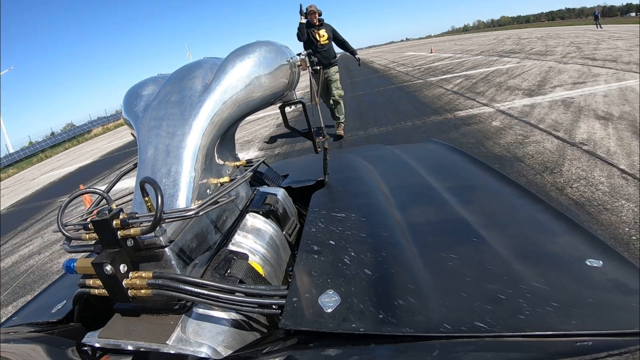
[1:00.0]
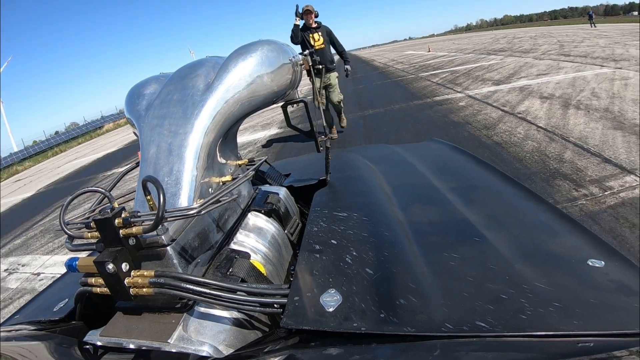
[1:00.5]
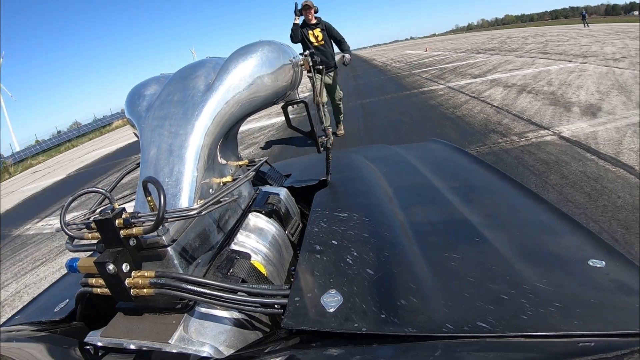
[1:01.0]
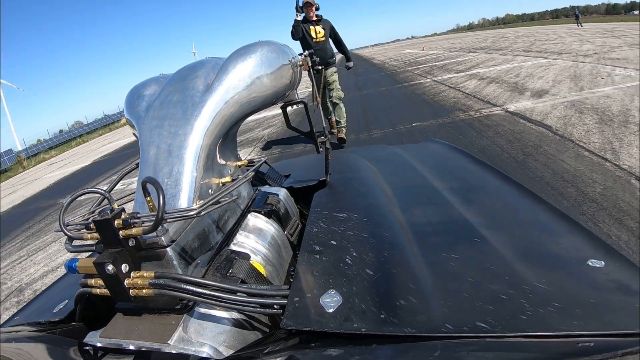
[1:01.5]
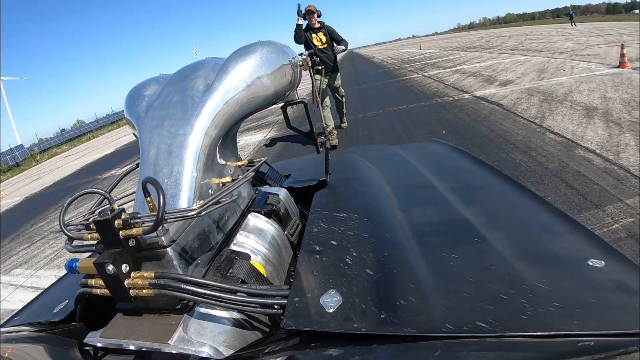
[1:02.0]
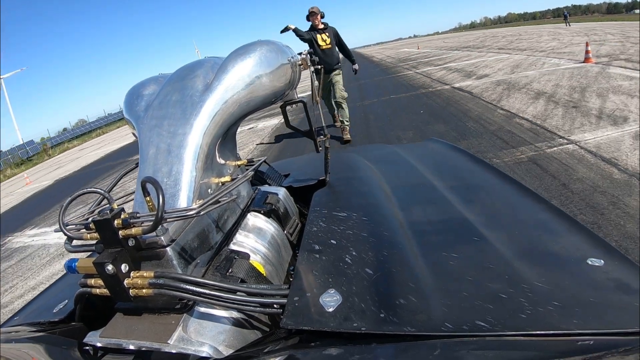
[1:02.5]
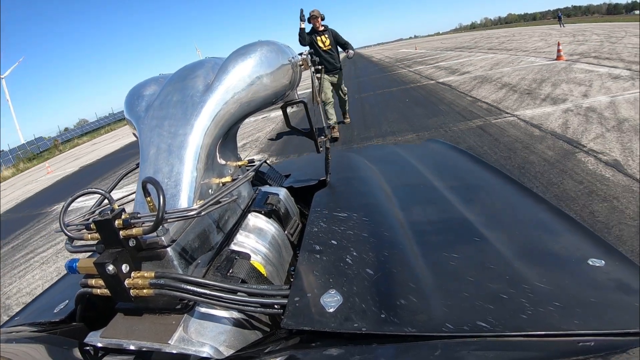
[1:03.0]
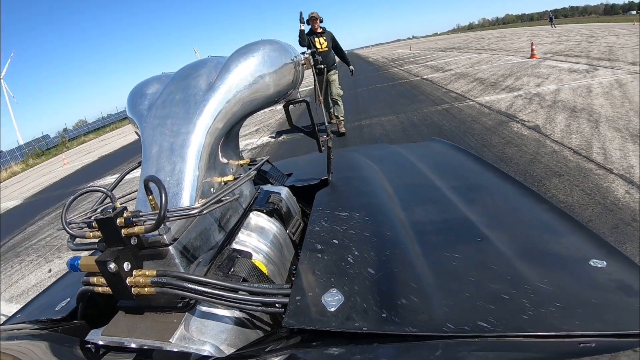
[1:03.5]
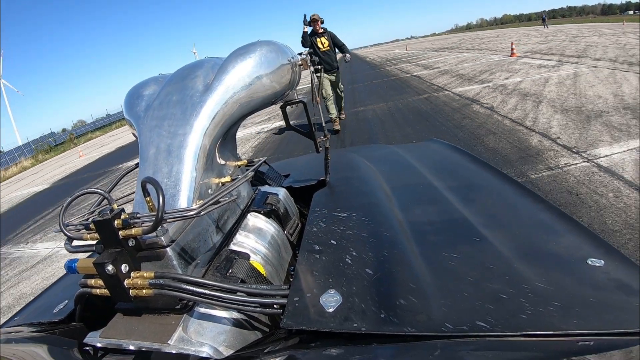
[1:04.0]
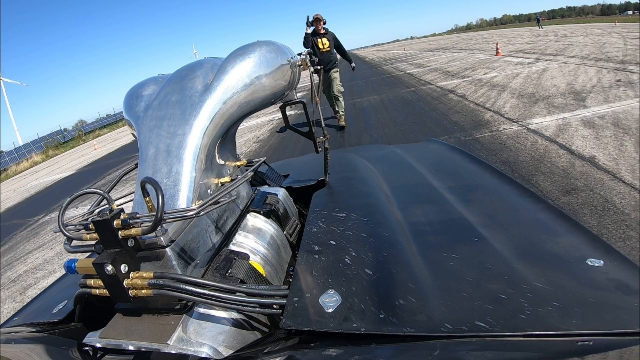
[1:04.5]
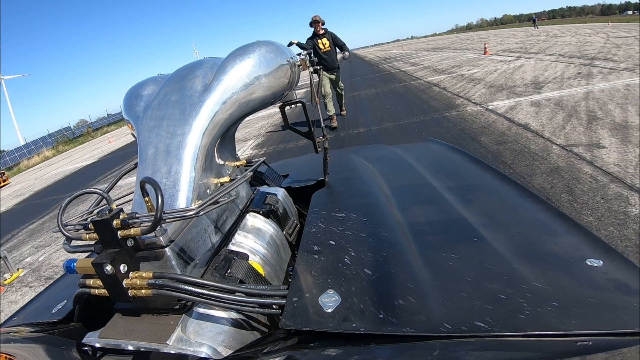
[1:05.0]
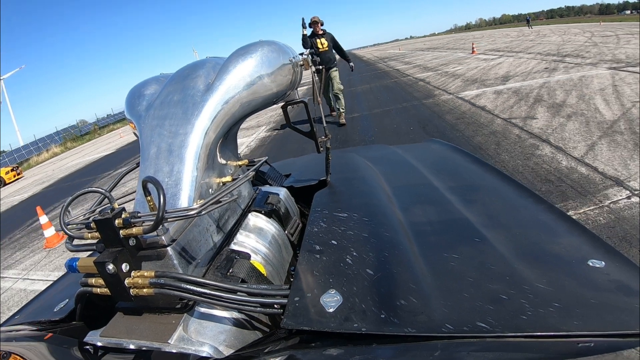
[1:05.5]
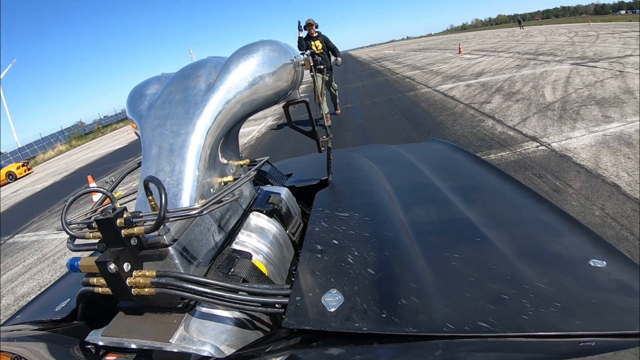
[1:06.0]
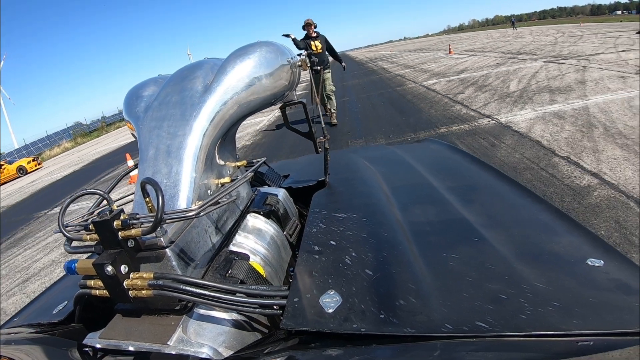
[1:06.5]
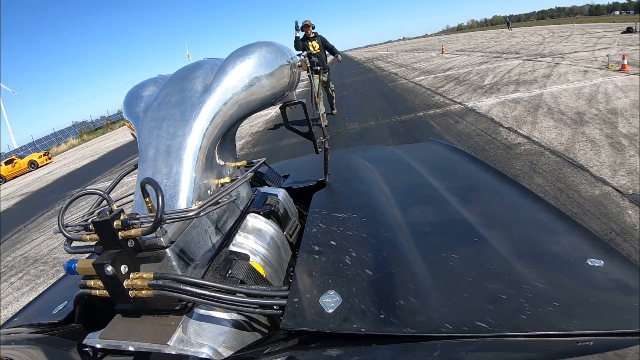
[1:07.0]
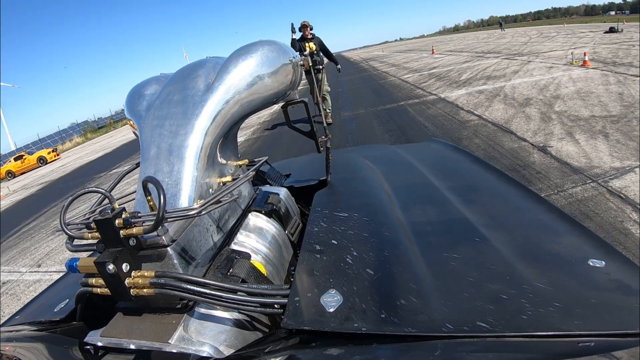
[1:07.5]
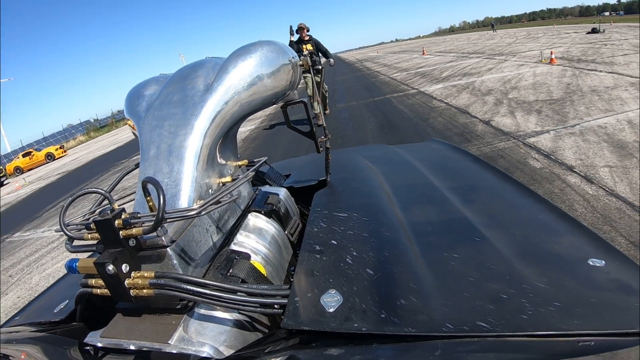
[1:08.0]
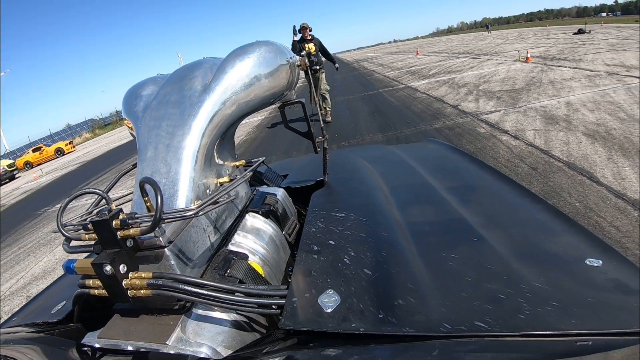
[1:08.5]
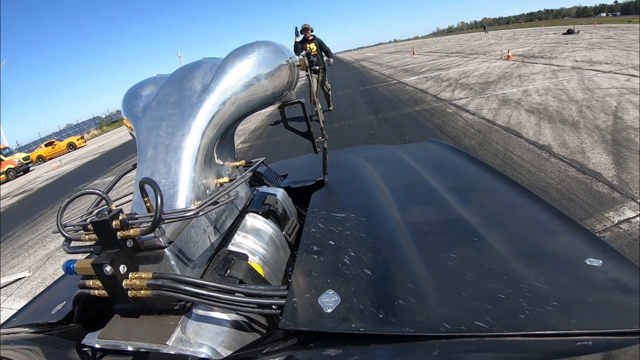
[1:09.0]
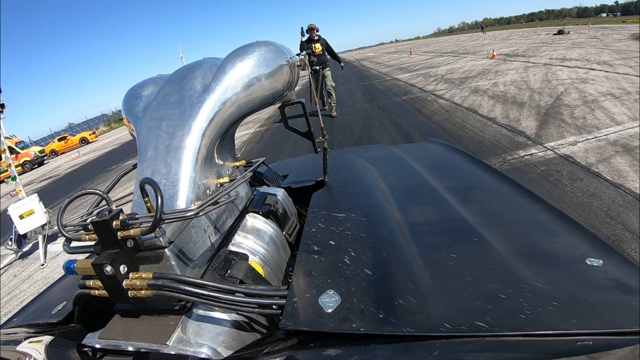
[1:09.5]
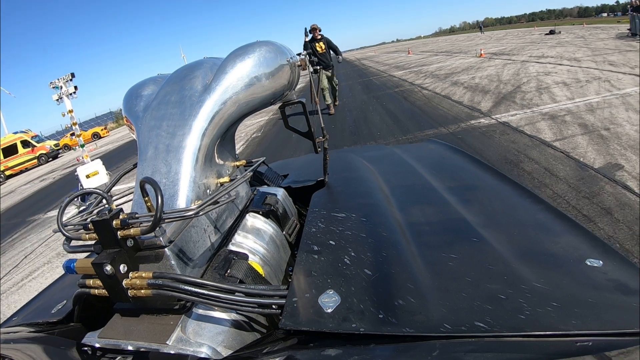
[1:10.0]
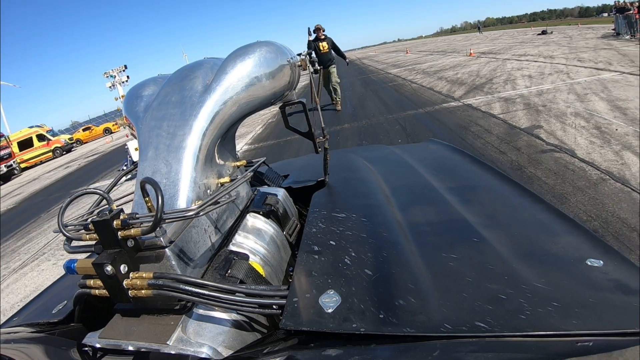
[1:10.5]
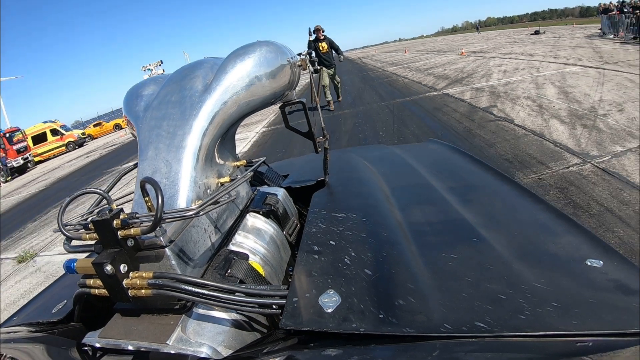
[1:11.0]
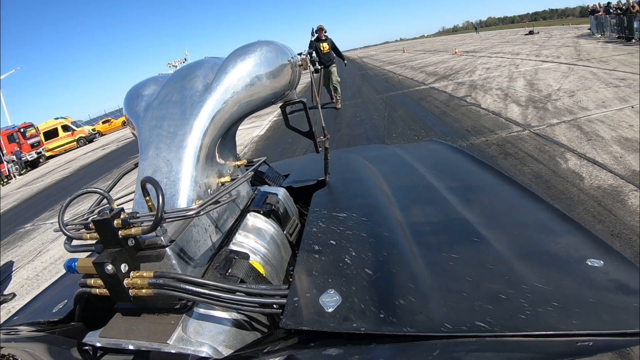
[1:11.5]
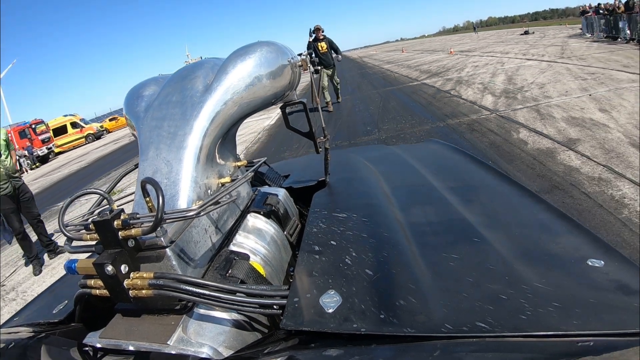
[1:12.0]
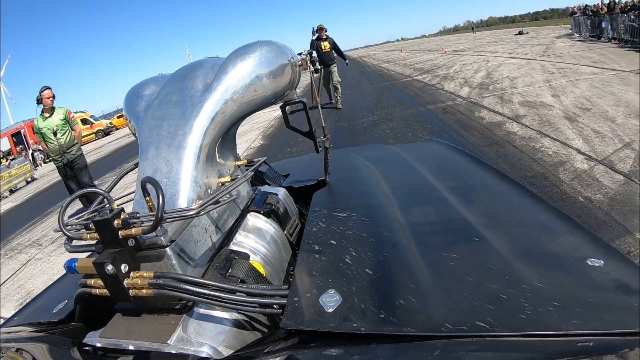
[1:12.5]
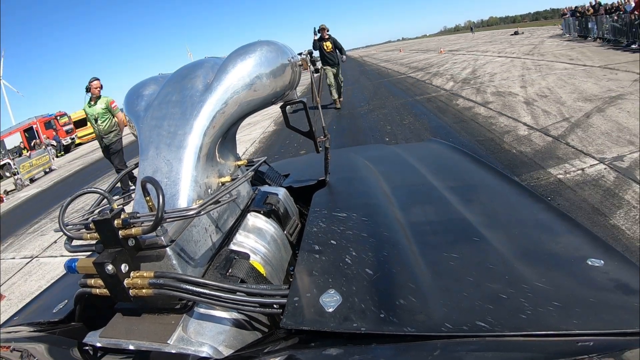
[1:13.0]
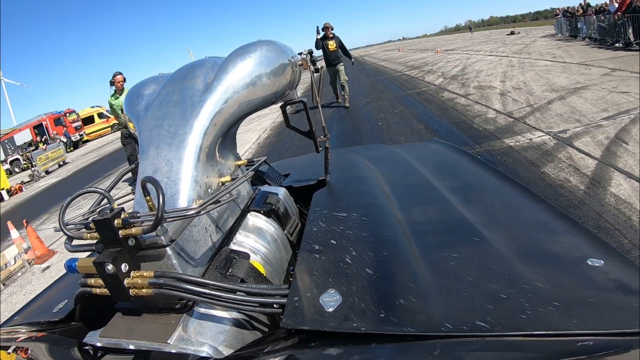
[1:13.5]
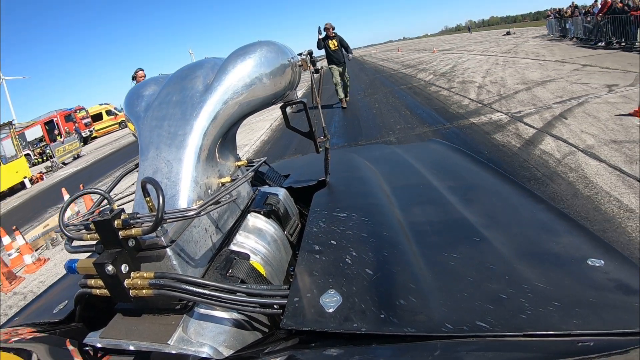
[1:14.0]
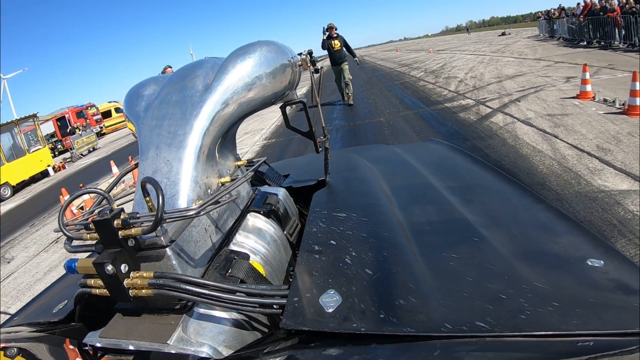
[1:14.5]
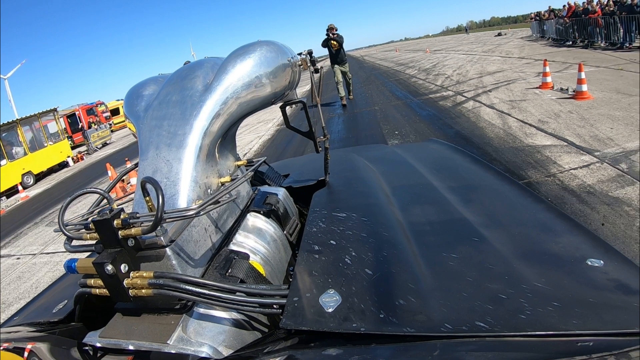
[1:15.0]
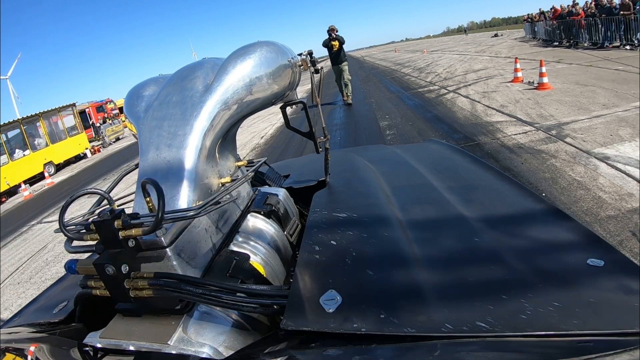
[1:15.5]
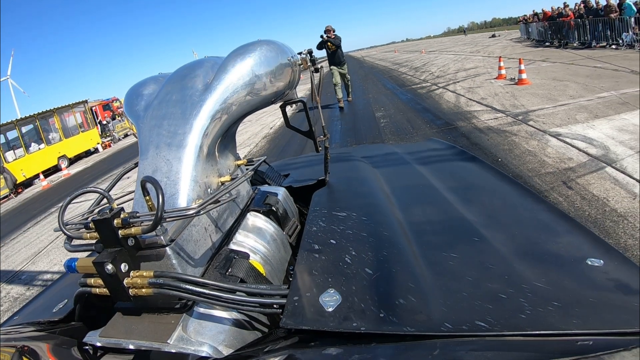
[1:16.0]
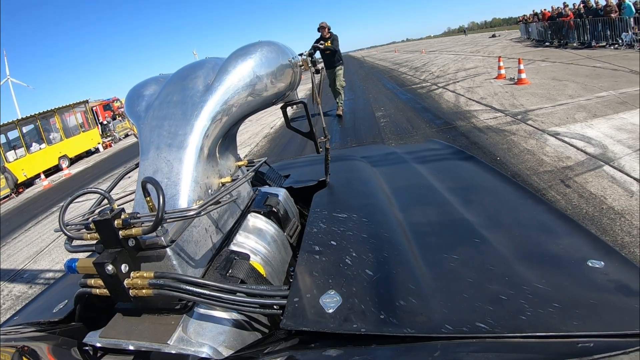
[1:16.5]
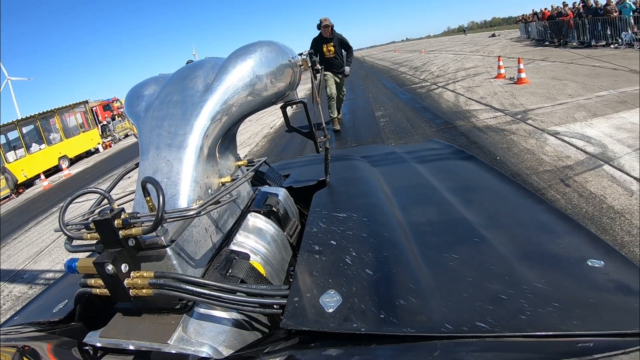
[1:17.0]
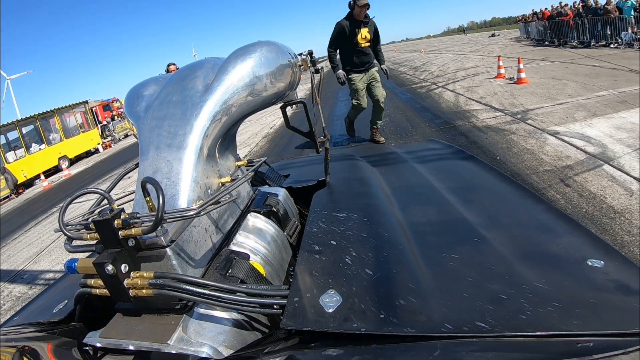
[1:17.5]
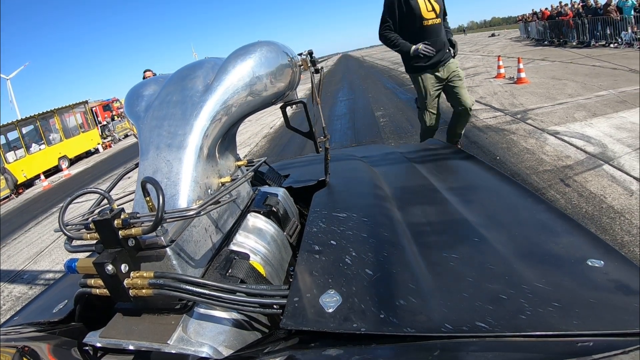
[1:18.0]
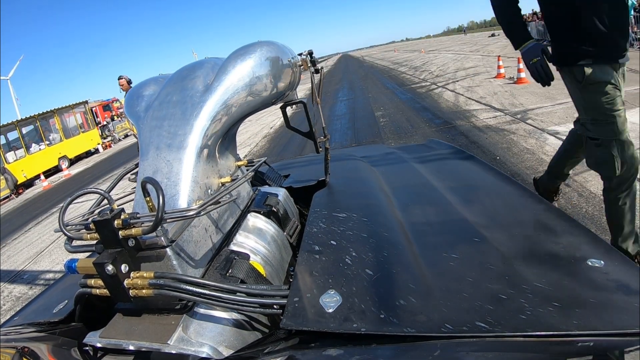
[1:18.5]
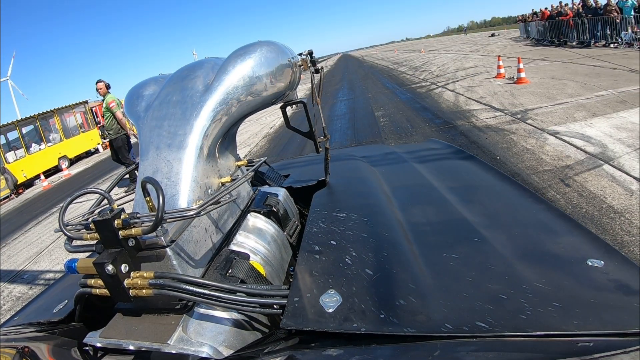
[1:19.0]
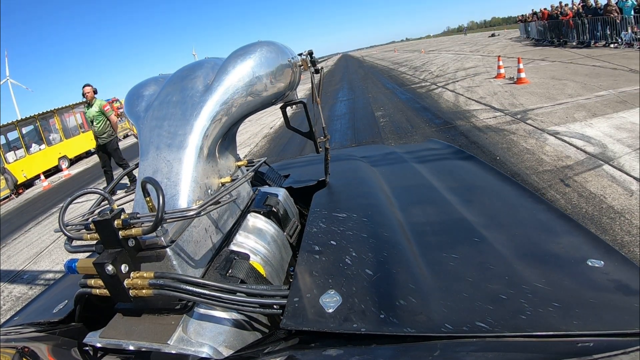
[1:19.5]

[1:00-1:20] A gray drag racing car drives backwards on a cement strip. A man in a blue jacket with yellow lettering and gray or tan pants walks behind it, and at the end he runs to the back of the car. While the car is in reverse, orange cones, a few people and trees are visible in the distance. On the left-hand side another man appears with headgear on, and some cars and trucks are also on the left, including a bright yellow car. A windmill is in the very far distance. A pole with lights on it is visible as the car reverses. On top of the gray car is a silver engine with plugs and wires coming in and out of it.